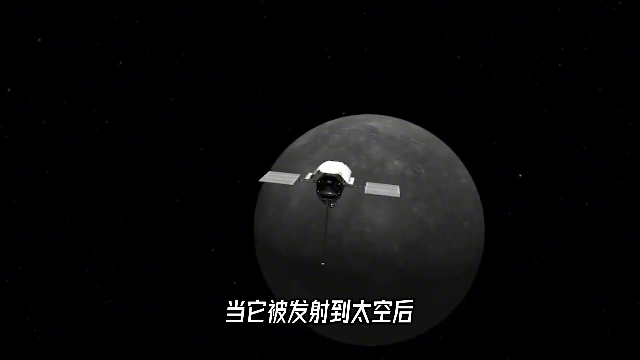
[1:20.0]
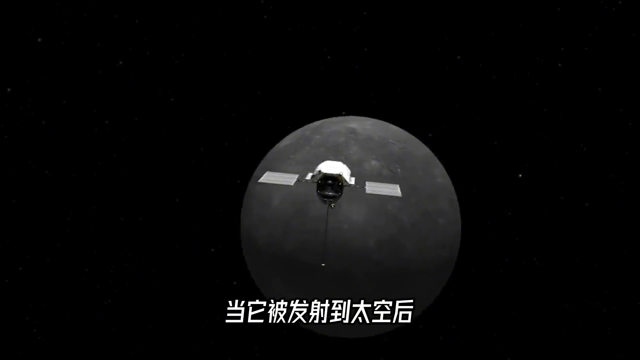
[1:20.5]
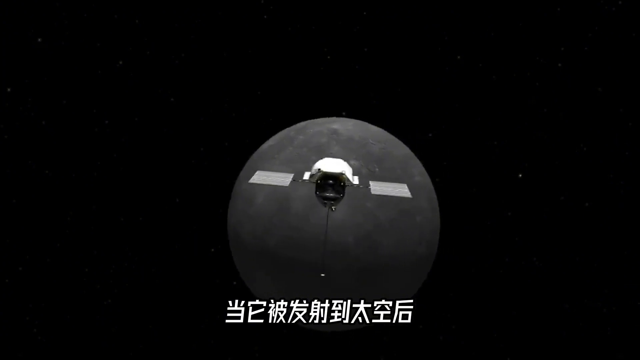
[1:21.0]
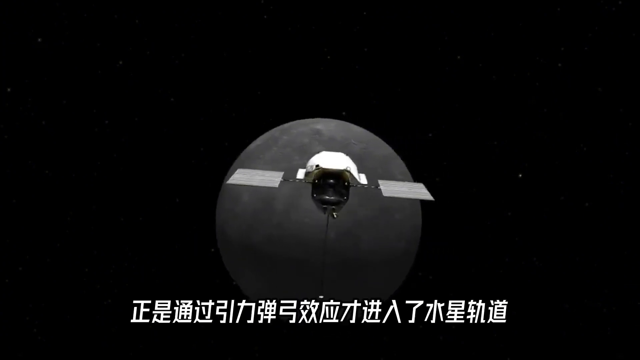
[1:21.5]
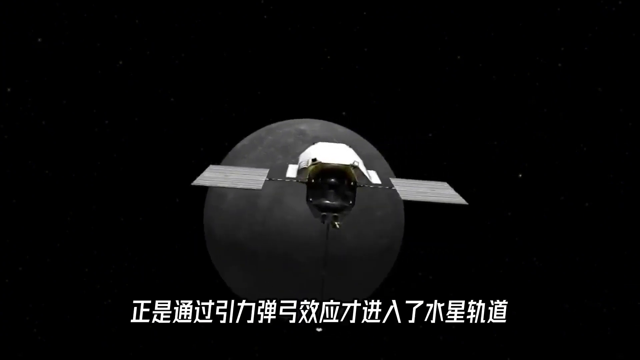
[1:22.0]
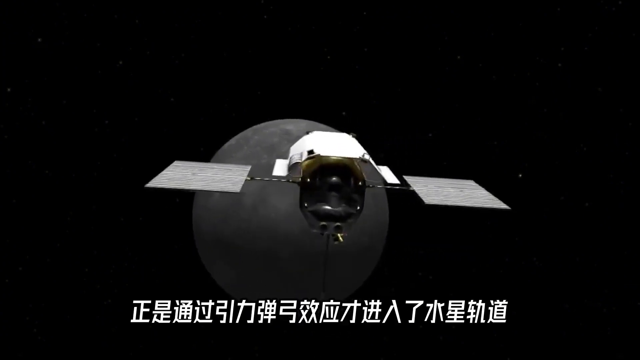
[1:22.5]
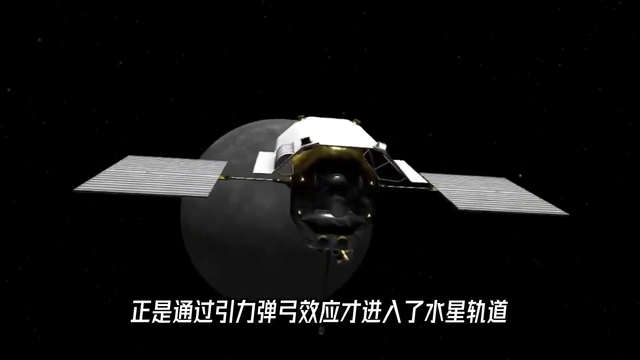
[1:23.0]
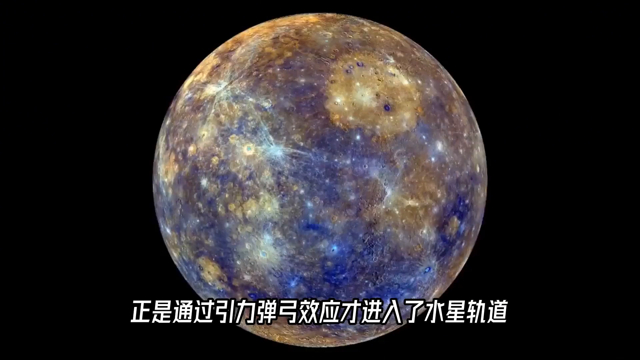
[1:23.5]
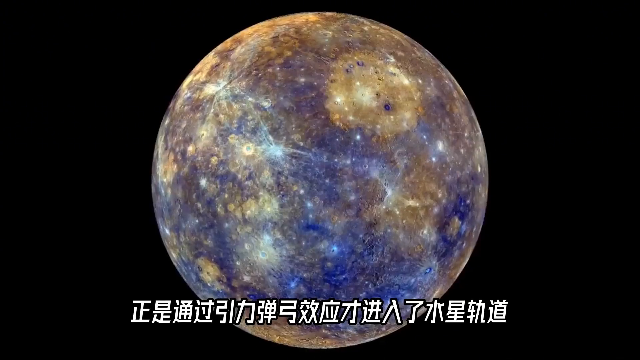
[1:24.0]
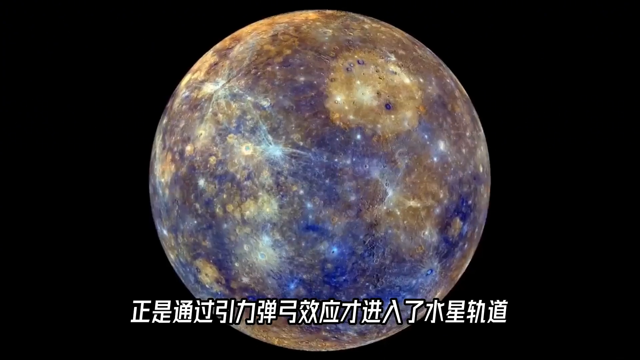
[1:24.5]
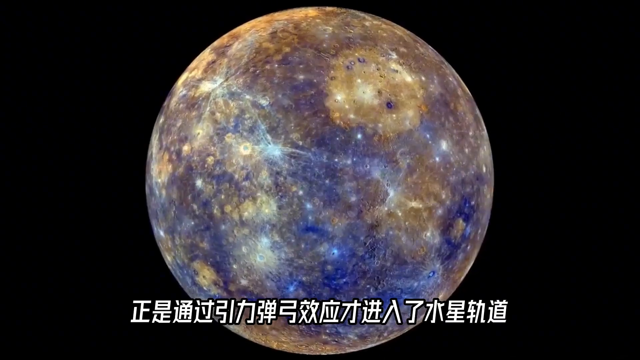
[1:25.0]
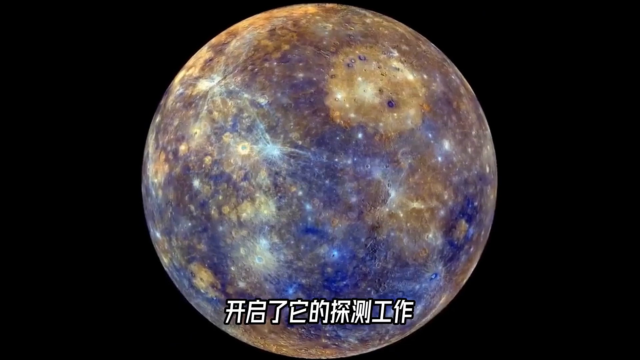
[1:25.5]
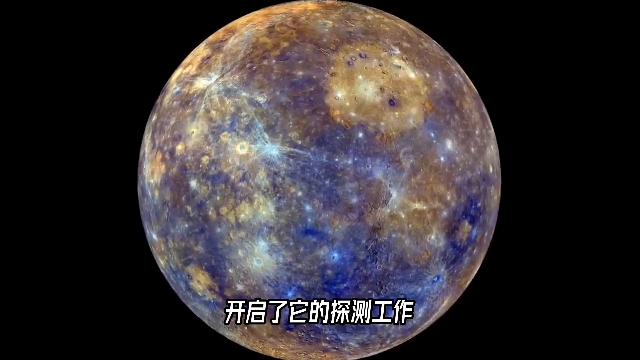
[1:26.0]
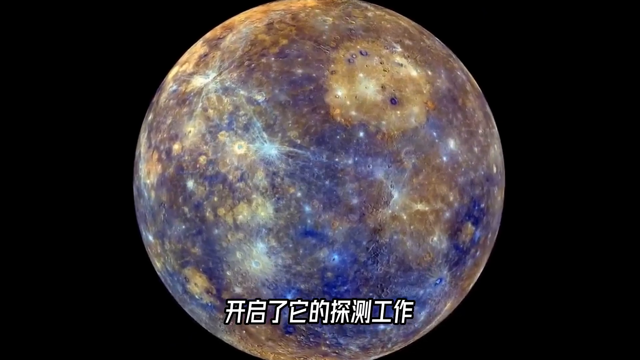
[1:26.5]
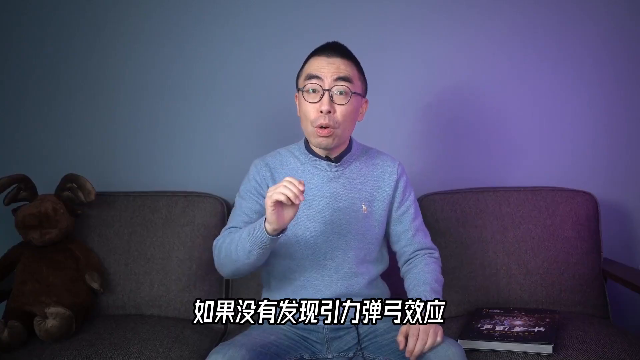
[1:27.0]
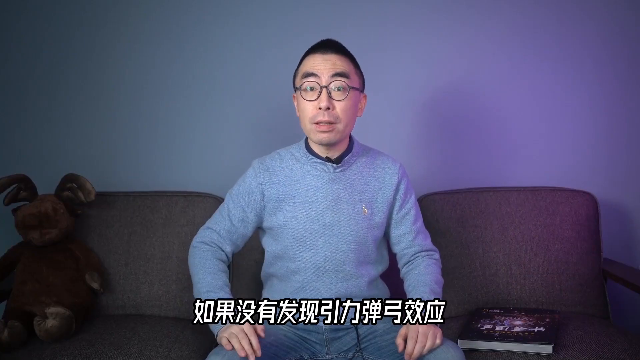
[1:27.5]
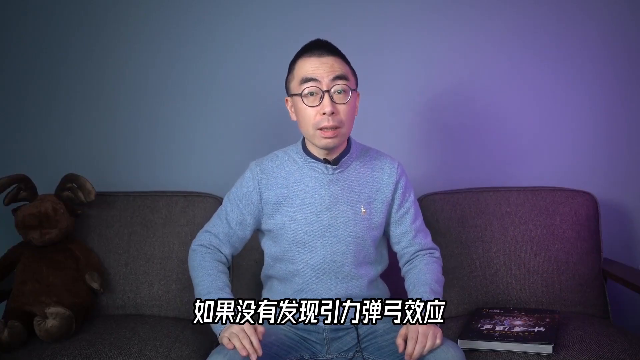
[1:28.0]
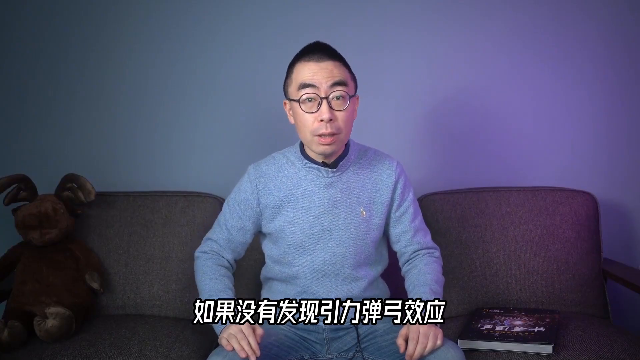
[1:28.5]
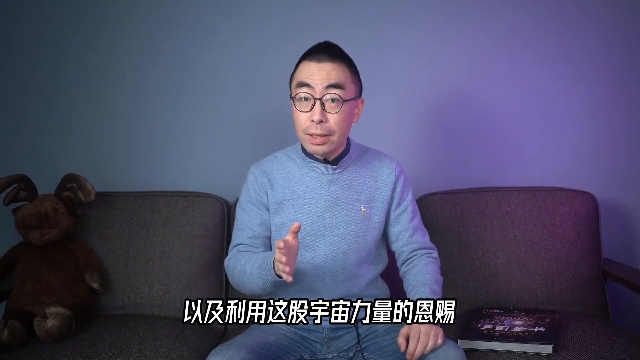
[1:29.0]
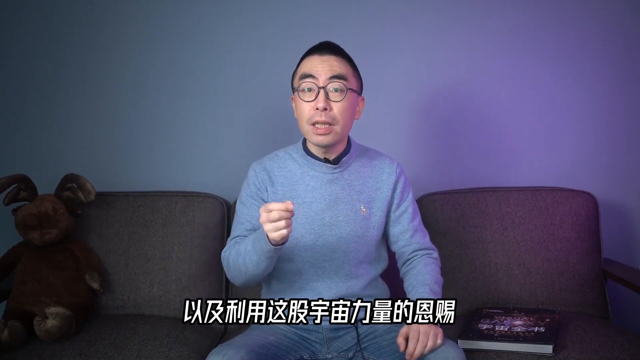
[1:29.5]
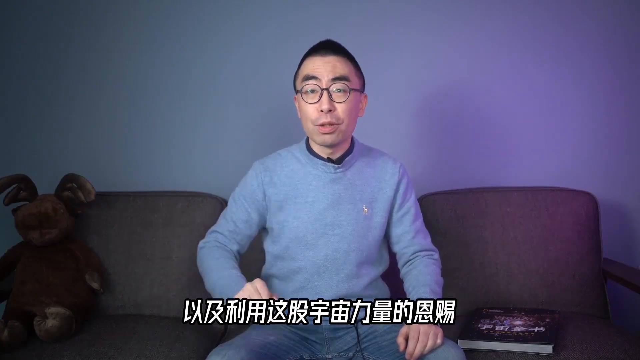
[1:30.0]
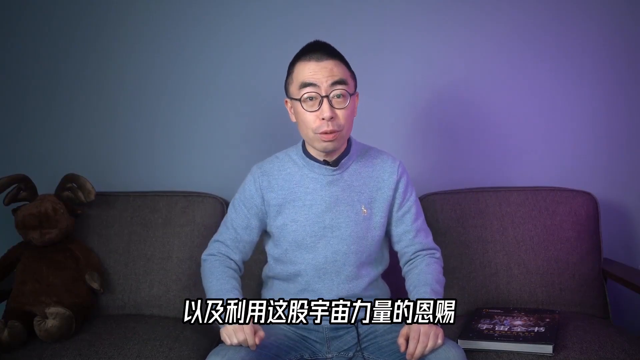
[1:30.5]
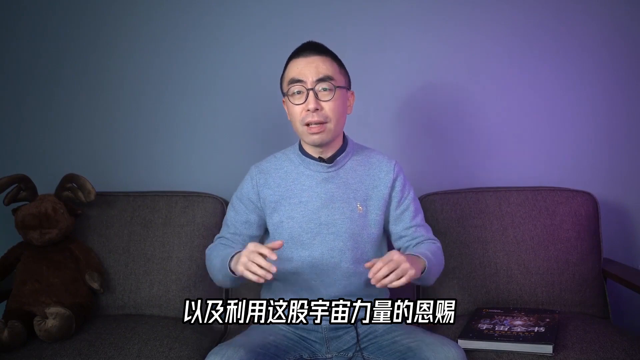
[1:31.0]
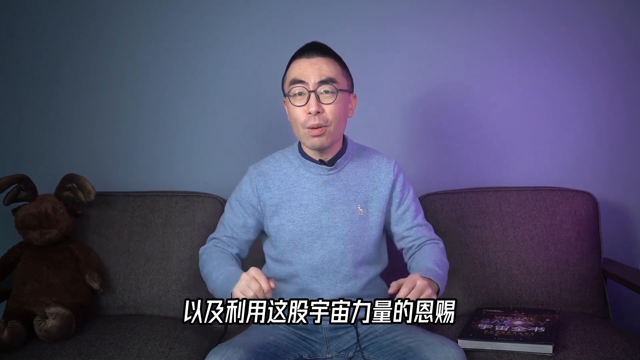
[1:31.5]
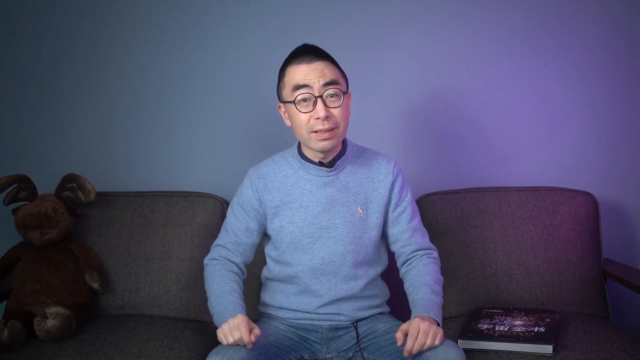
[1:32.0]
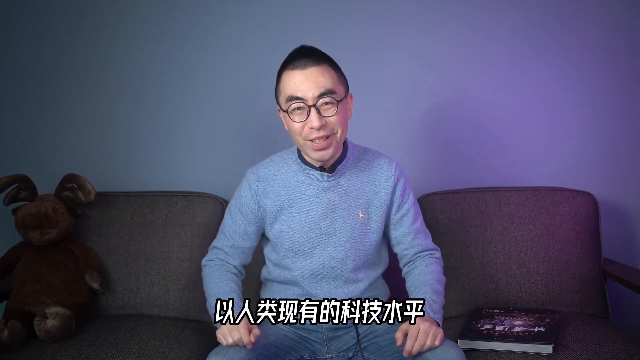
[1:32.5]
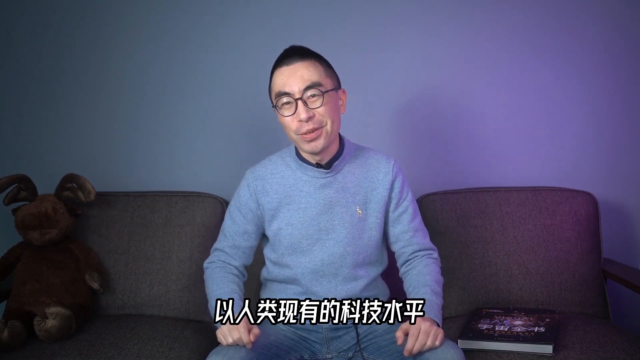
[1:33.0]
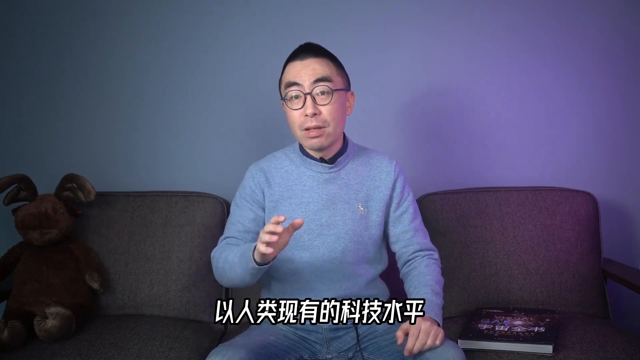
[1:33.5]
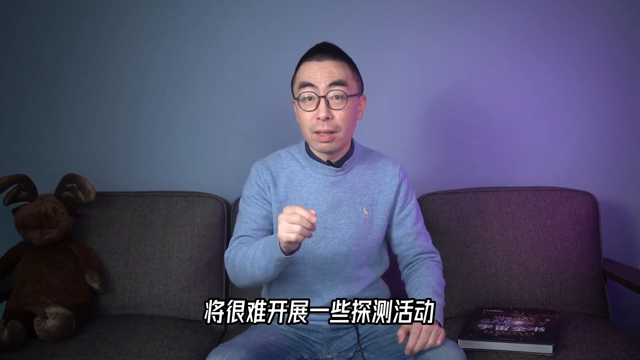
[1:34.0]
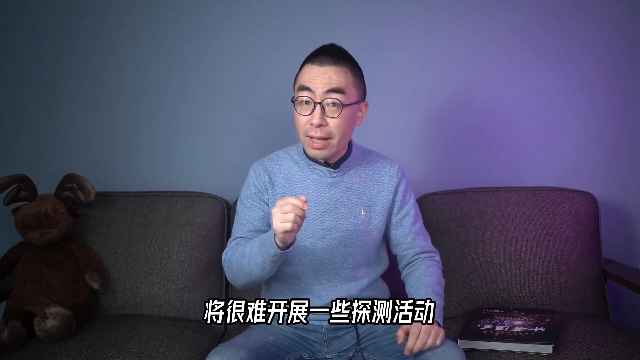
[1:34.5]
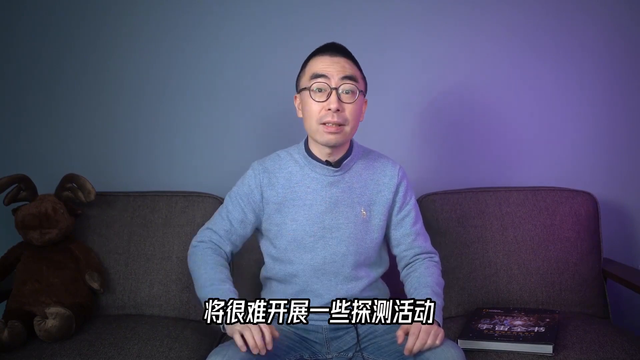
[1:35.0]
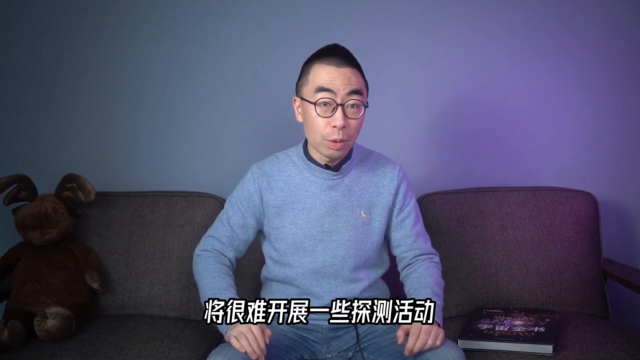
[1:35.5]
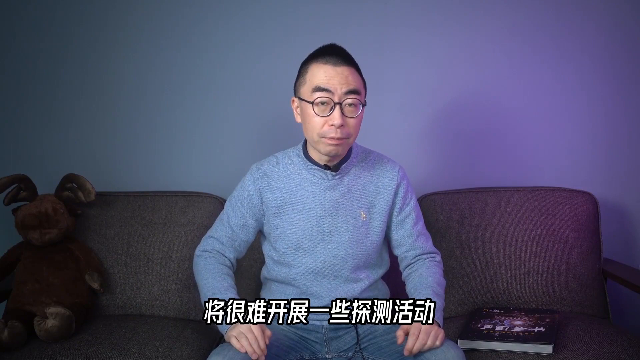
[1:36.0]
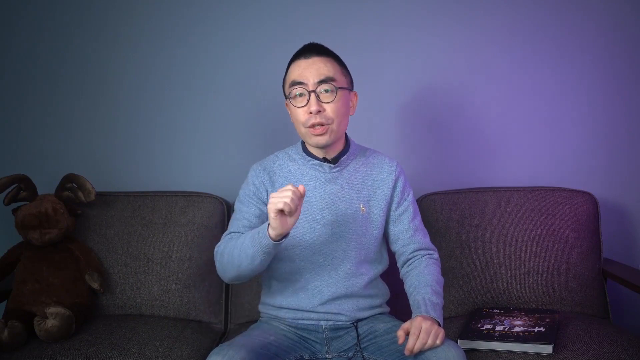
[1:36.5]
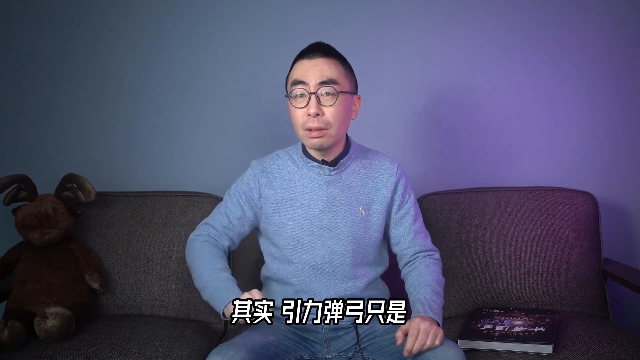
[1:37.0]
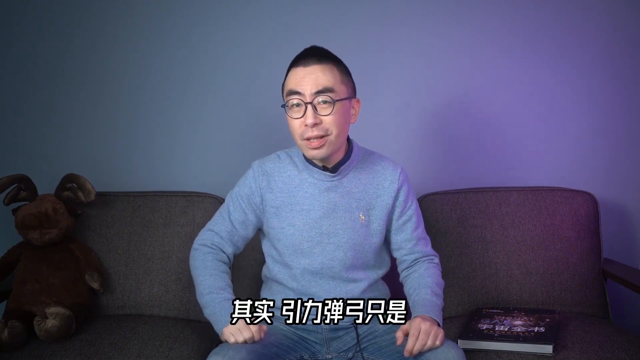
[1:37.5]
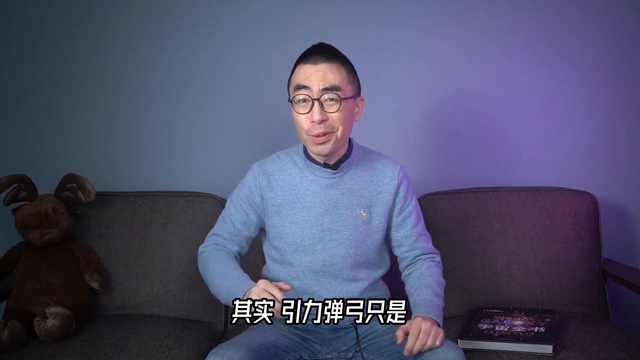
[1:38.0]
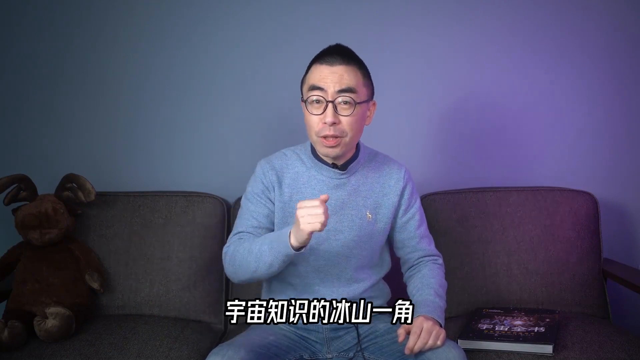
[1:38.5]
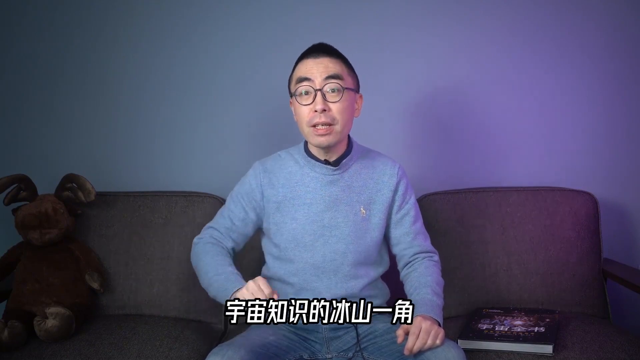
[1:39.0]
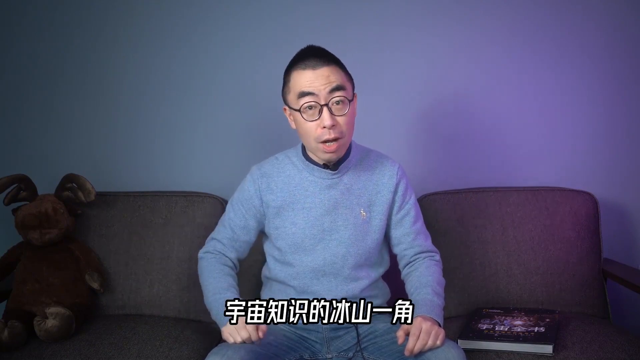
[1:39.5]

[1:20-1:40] A computer-animated visual shows a satellite floating in outer space and orbiting a dark gray planet, with various Chinese subtitles at the bottom of the screen. The view zooms in closer toward the satellite, then cuts to another outer-space scene with a close-up of a large planet in various colors of blue, yellow, brown, orange and dark red. The view zooms in on the planet, and then the scene changes to an Asian man sitting on a long gray couch. Next to him on the couch is a brown stuffed animal that looks like a moose. The man wears a long-sleeved gray sweater and large circular glasses, and has black bushy eyebrows and short black hair.